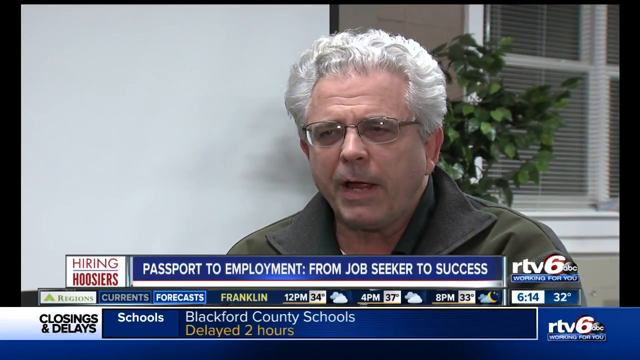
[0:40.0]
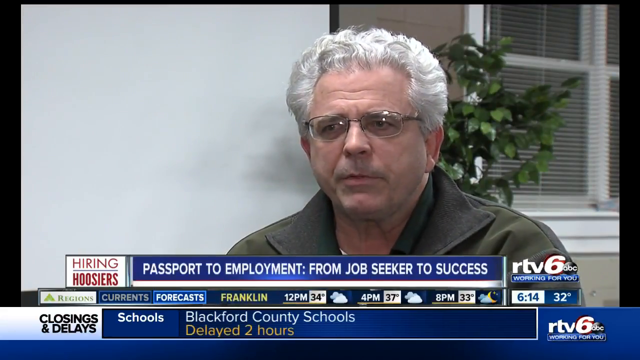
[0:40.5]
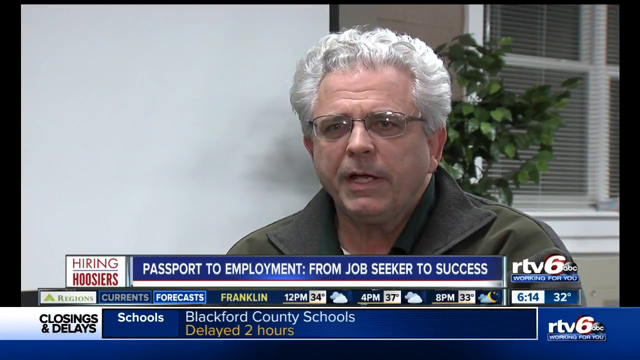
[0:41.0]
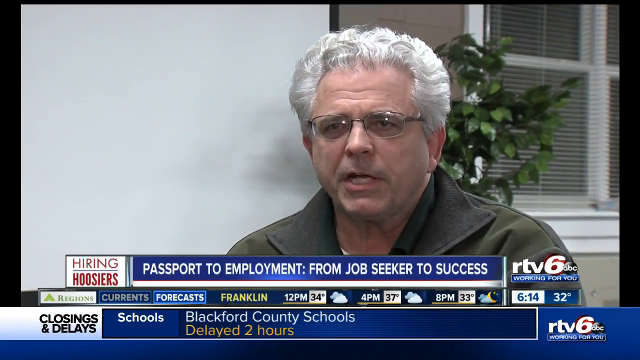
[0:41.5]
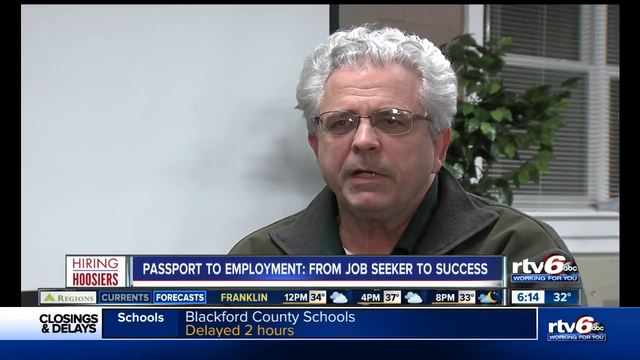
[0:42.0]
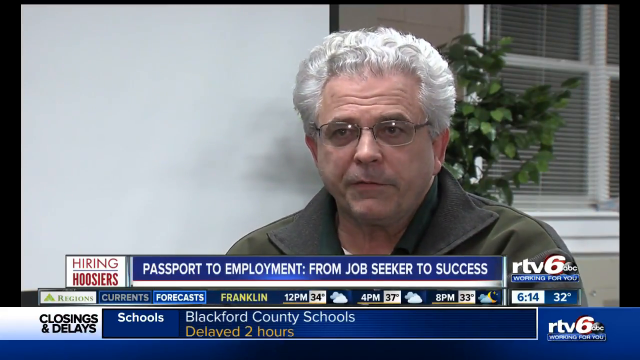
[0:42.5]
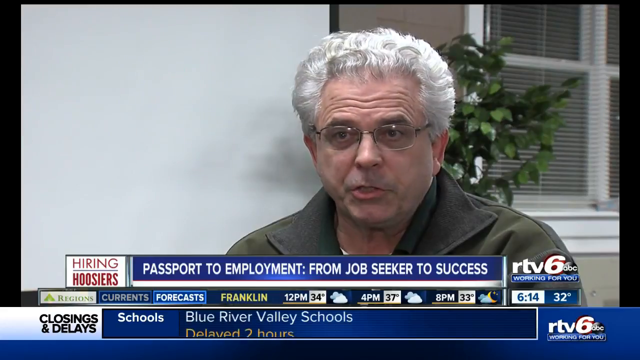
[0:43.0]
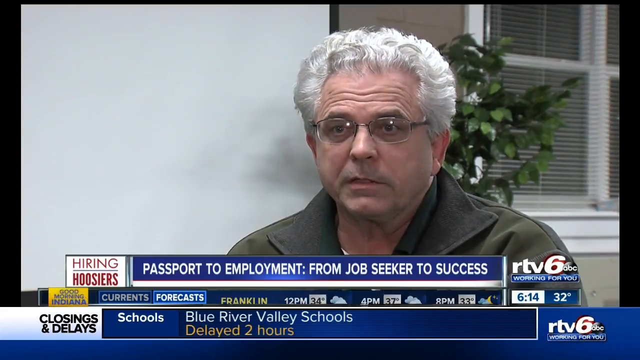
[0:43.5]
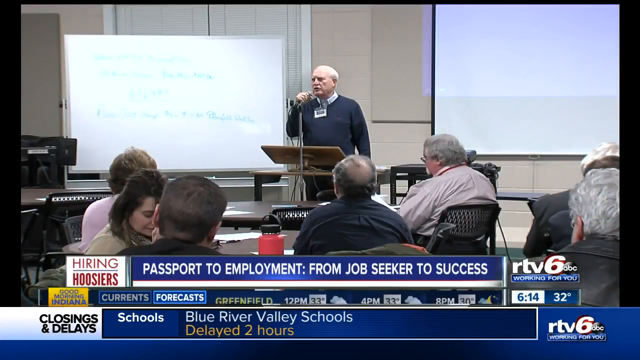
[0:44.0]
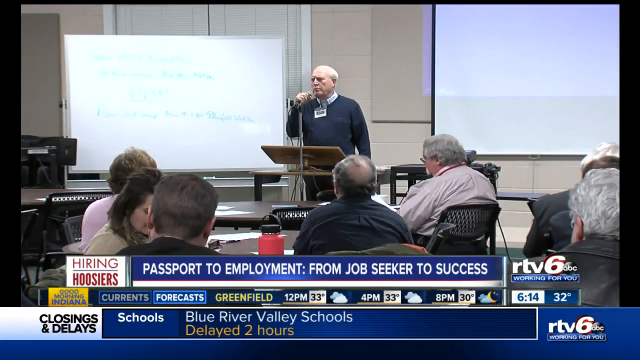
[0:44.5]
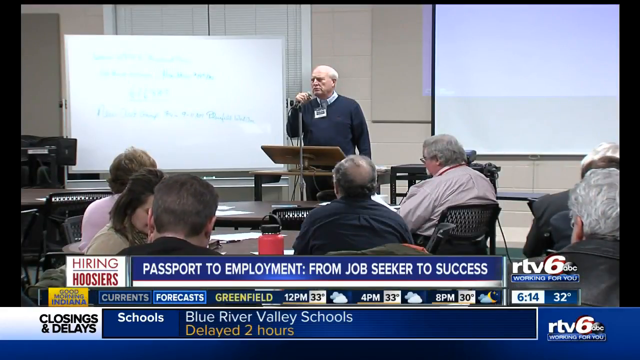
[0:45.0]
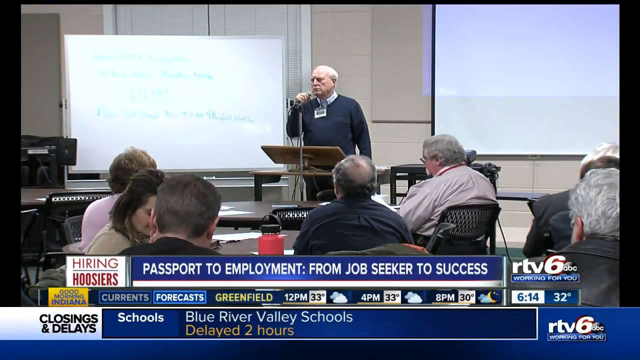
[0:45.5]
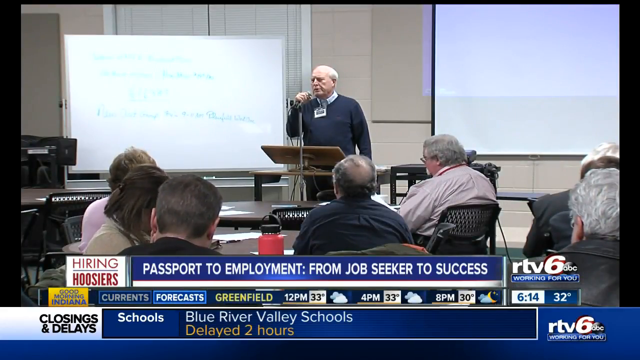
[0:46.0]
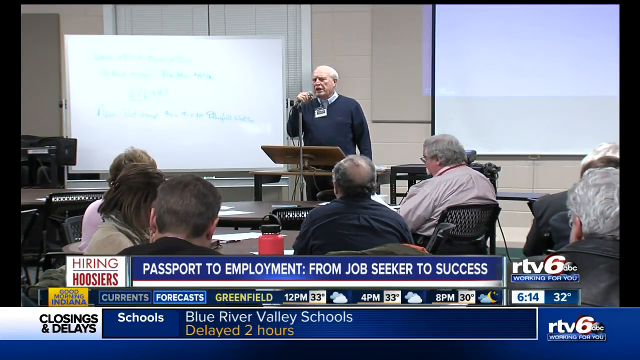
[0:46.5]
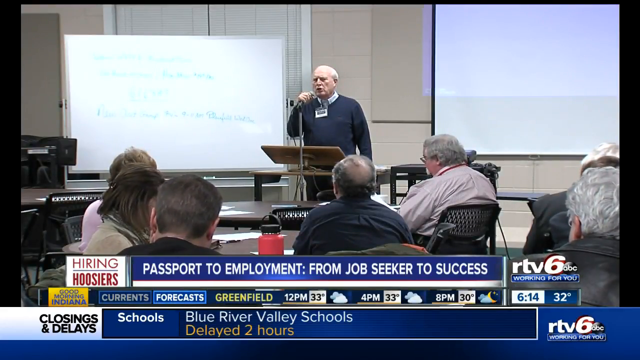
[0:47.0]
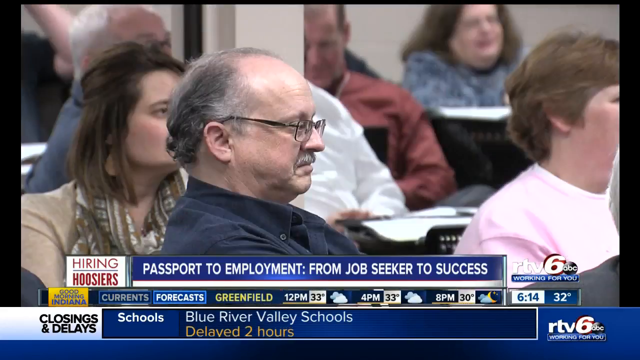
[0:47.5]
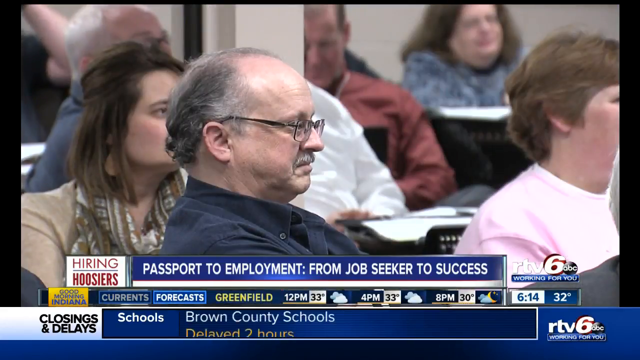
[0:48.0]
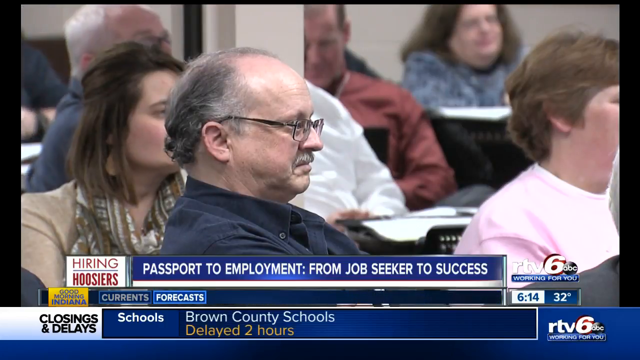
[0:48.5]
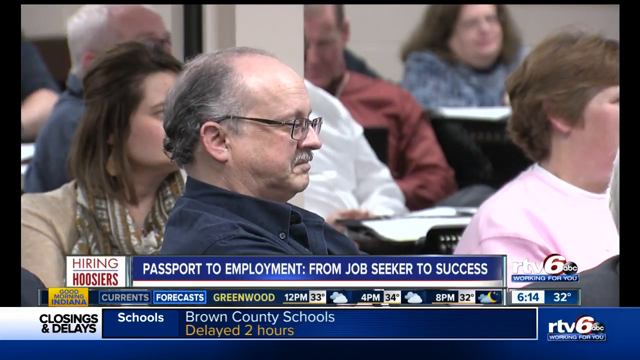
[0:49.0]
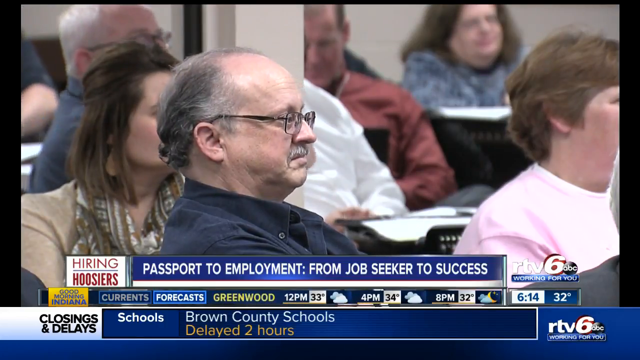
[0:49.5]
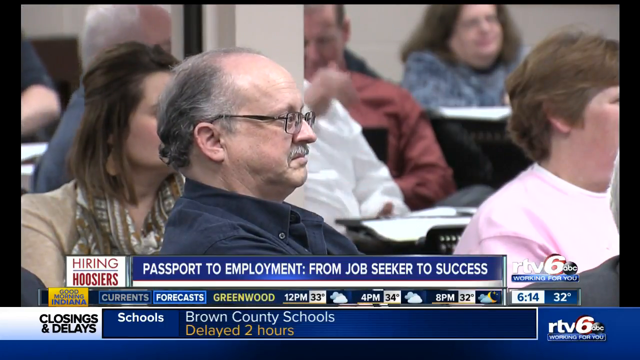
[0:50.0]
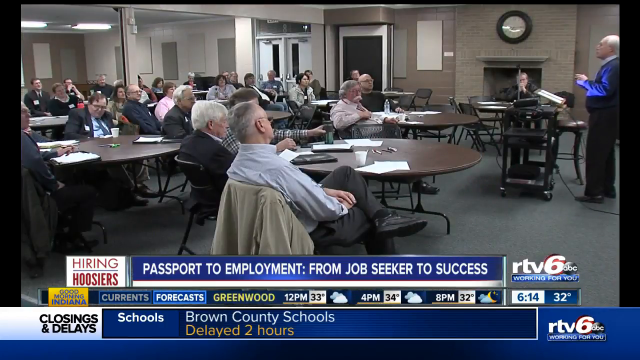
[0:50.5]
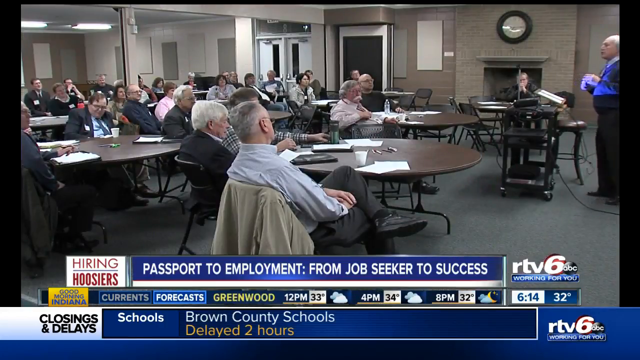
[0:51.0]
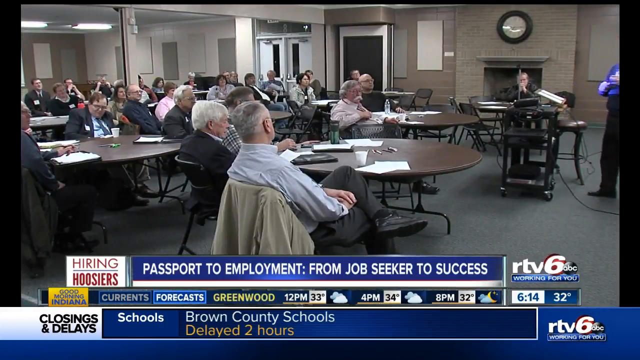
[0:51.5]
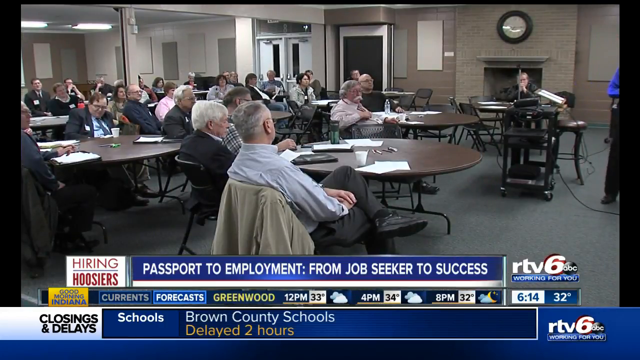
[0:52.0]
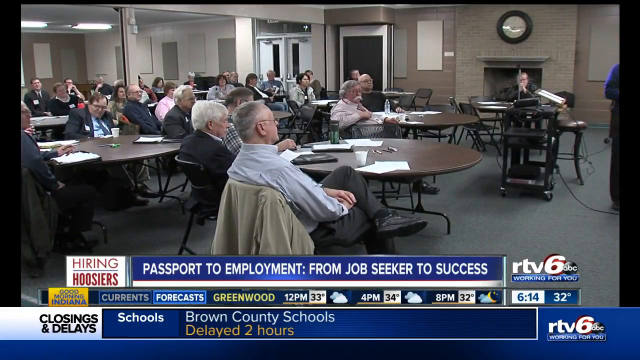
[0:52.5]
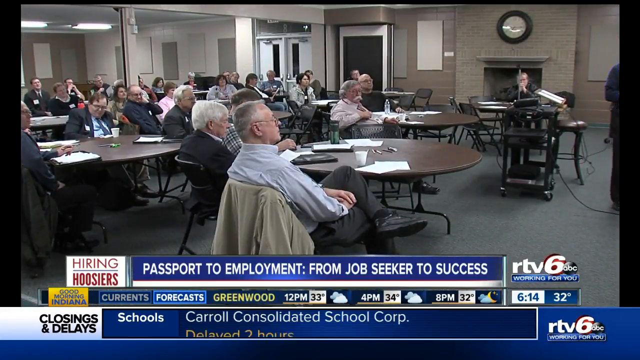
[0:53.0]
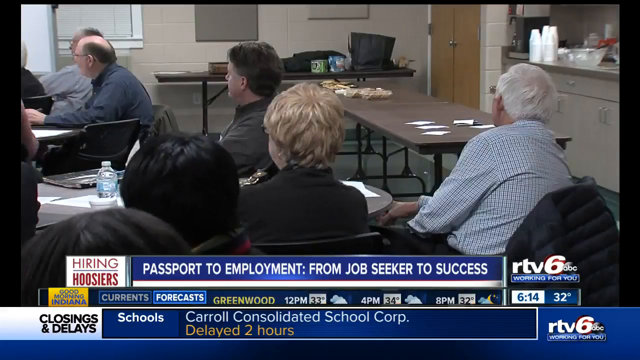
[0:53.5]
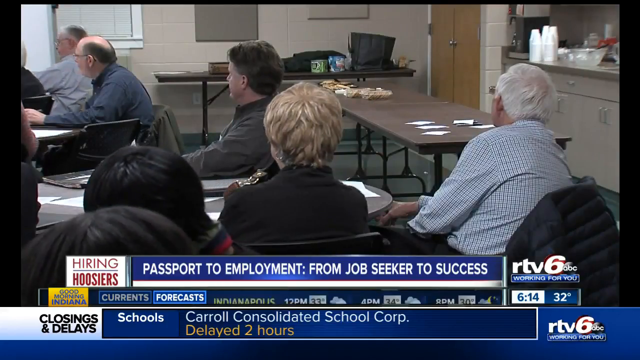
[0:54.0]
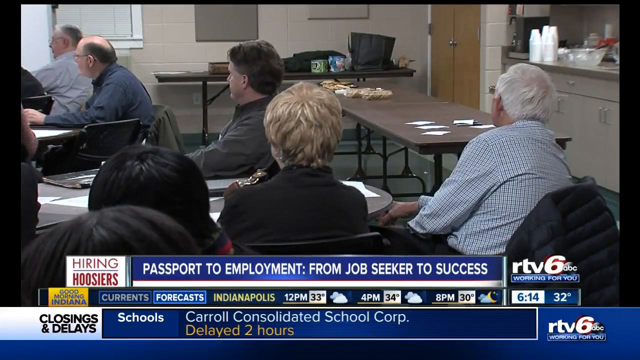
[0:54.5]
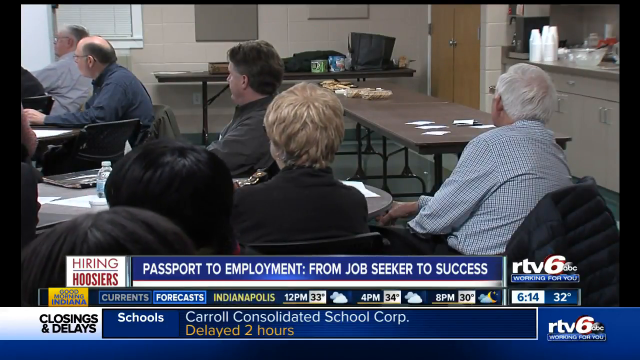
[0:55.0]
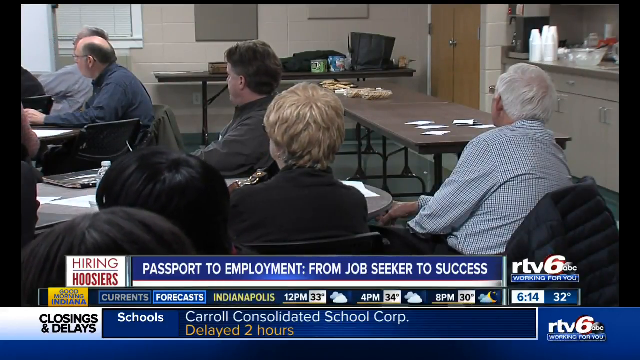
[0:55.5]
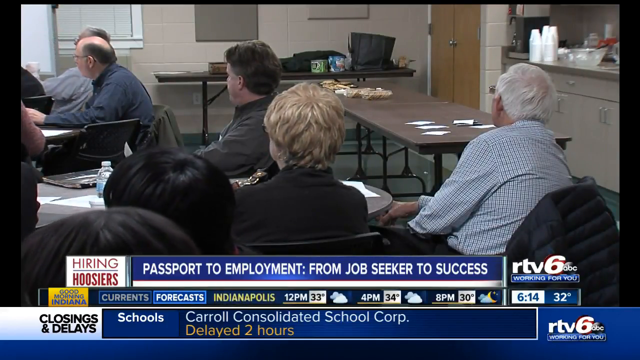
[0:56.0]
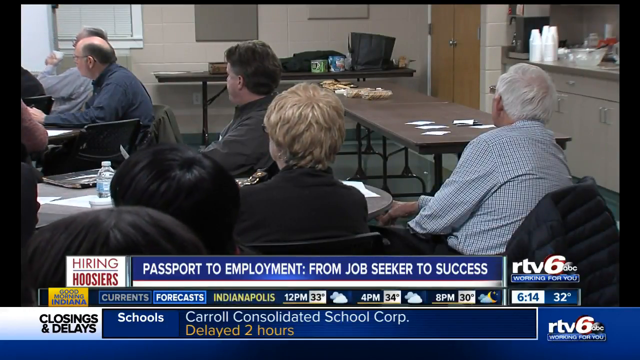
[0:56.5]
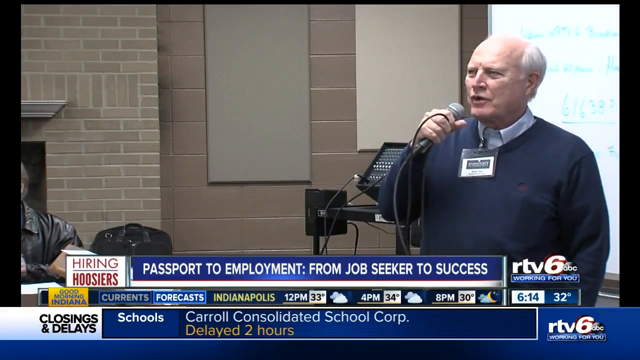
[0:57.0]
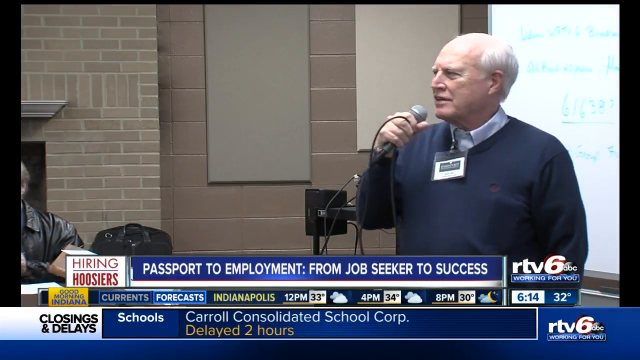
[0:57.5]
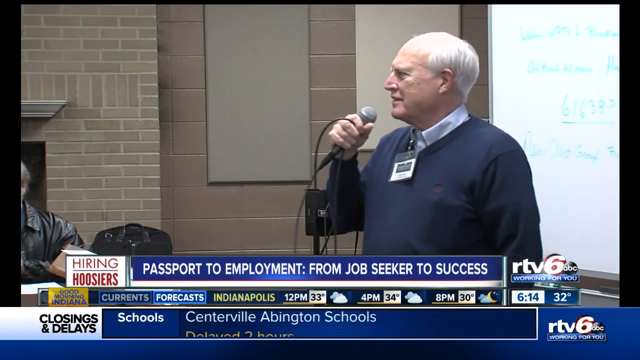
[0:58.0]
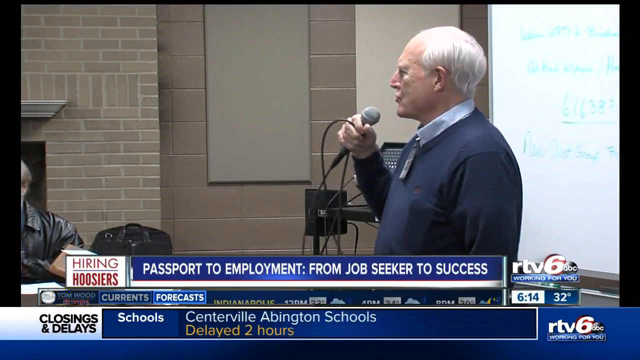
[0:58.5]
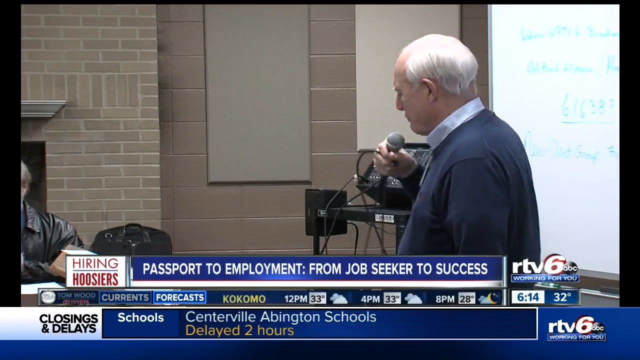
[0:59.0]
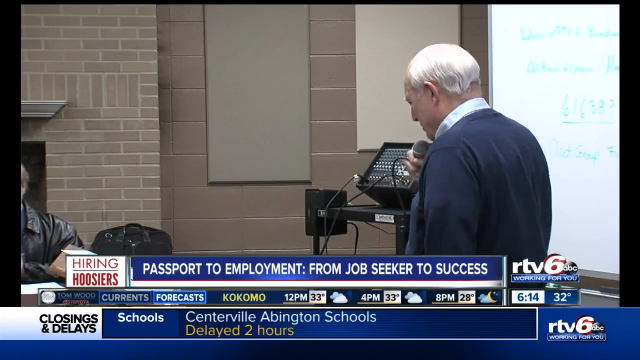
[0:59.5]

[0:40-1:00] The white-haired man talks to the news reporter. The video then abruptly switches to the big room, where a man at the very front stands in front of a dry erase board, with a screen for PowerPoint presentations on his other side. He holds a microphone and talks to the audience, a variety of people from grandmothers to kids right out of high school. The camera goes around the room, showing different people sitting and paying attention, then goes up to the front where the speaker is kind of smiling. His microphone looks black, and he walks around with it as he talks. The camera then pans back to the white-haired man.